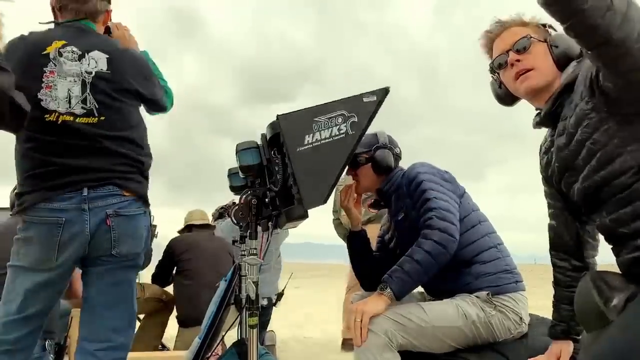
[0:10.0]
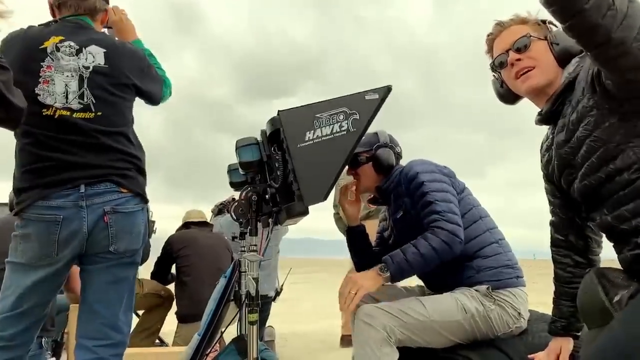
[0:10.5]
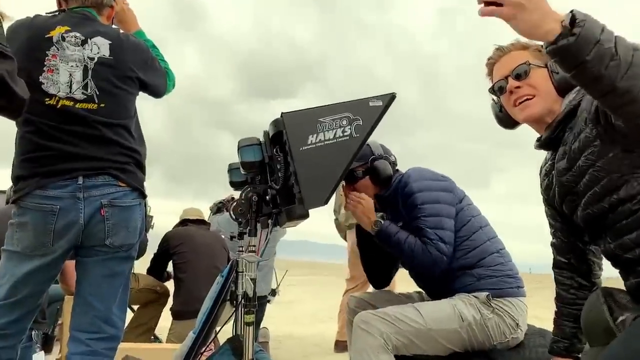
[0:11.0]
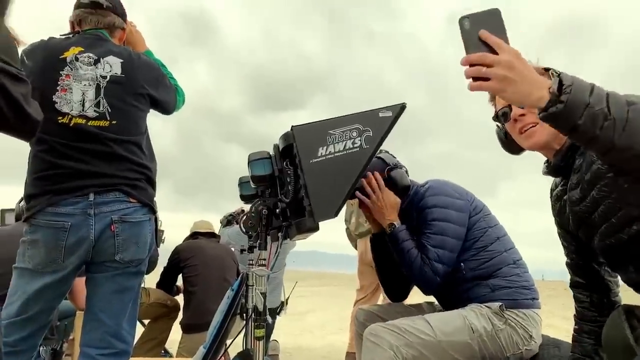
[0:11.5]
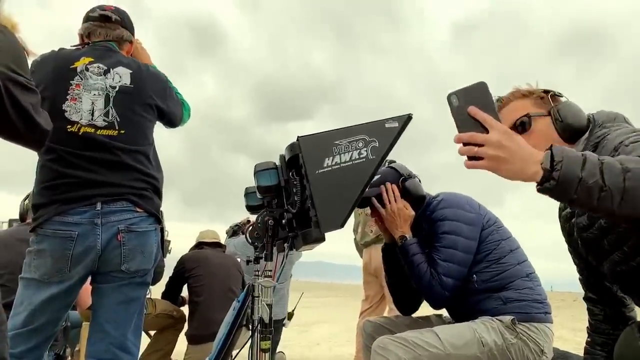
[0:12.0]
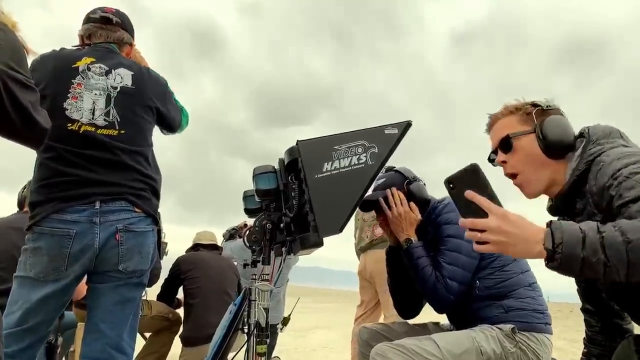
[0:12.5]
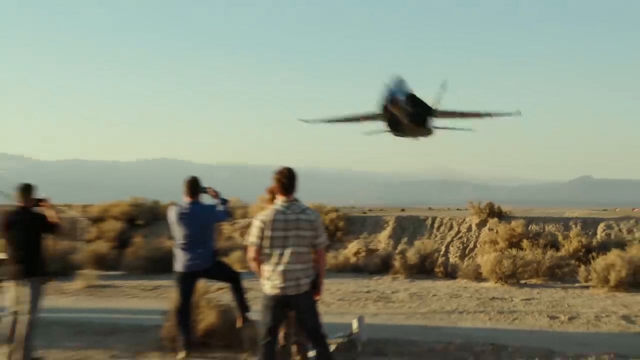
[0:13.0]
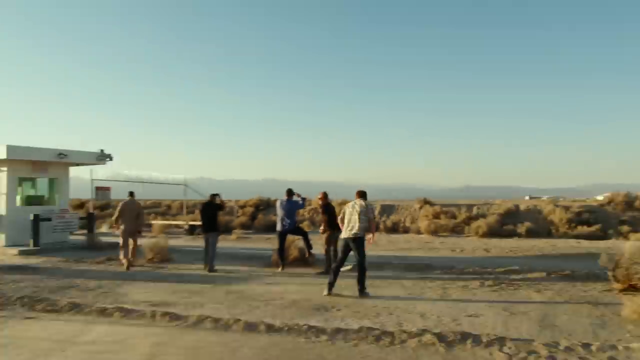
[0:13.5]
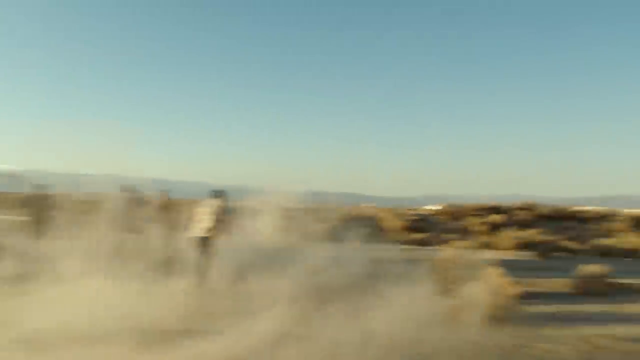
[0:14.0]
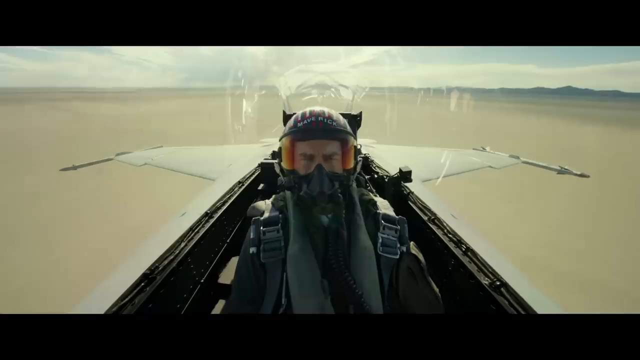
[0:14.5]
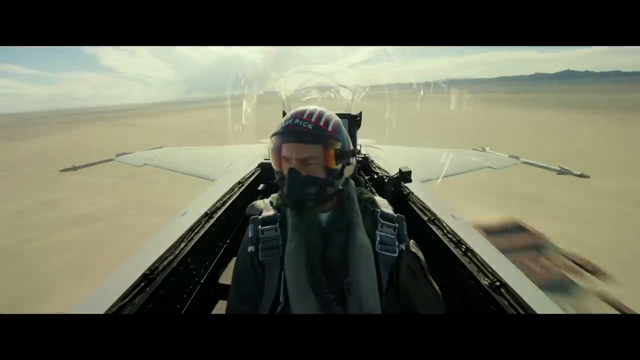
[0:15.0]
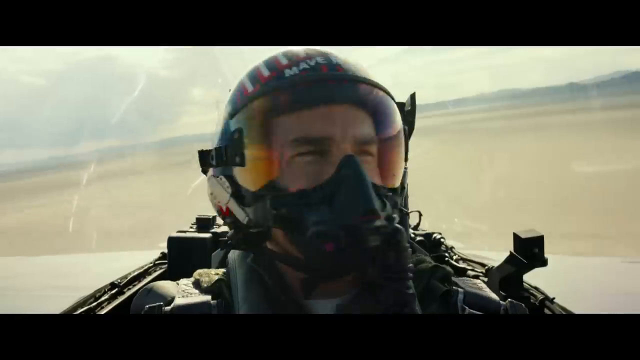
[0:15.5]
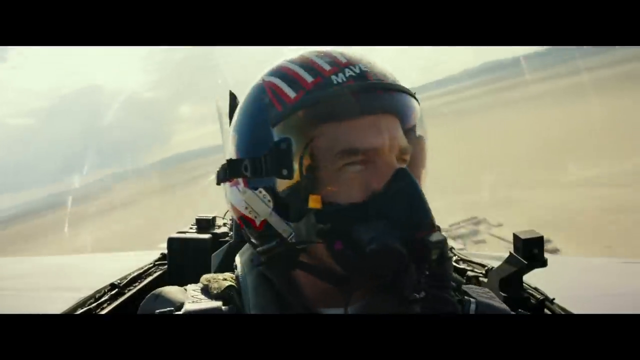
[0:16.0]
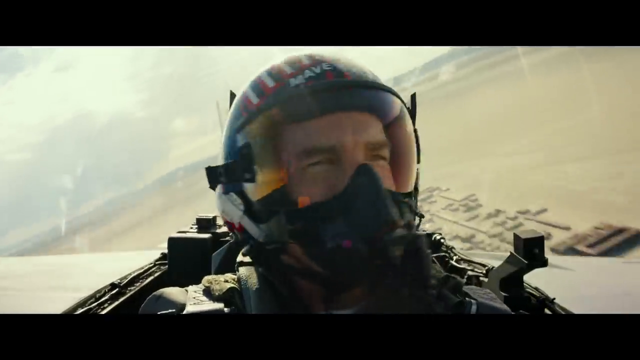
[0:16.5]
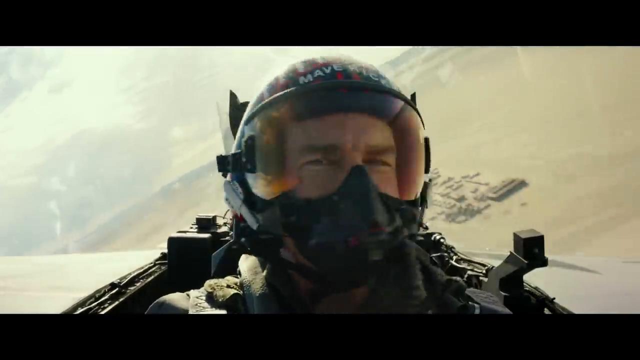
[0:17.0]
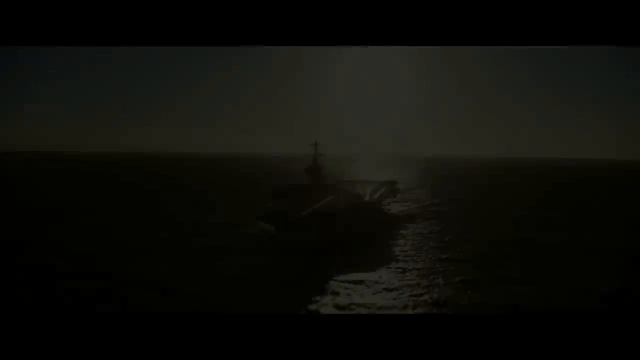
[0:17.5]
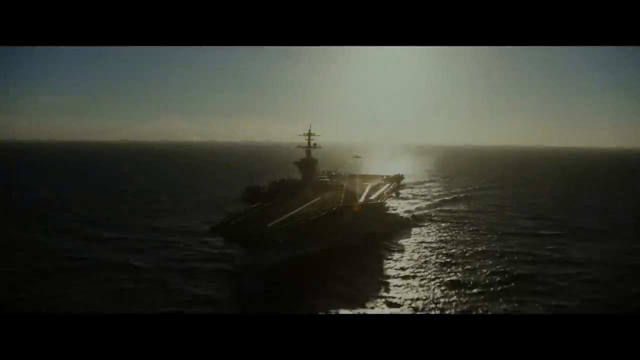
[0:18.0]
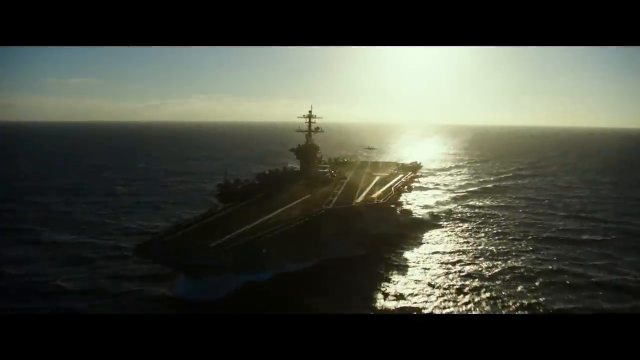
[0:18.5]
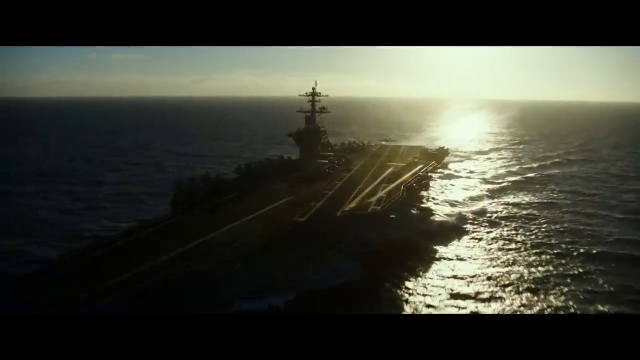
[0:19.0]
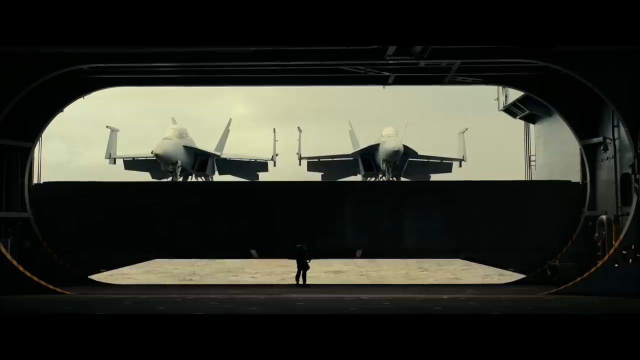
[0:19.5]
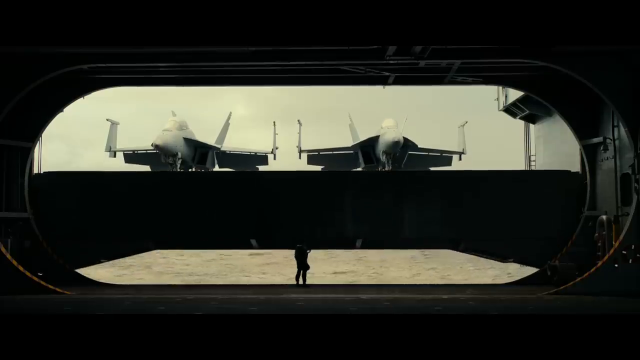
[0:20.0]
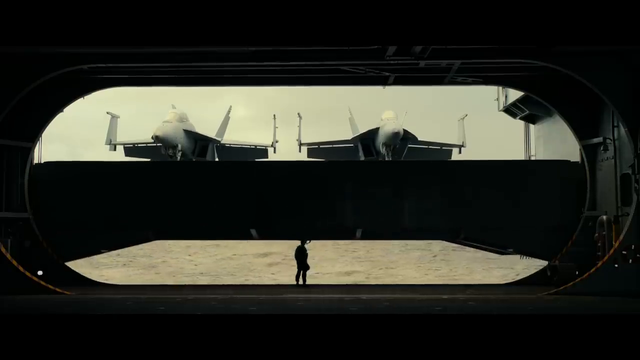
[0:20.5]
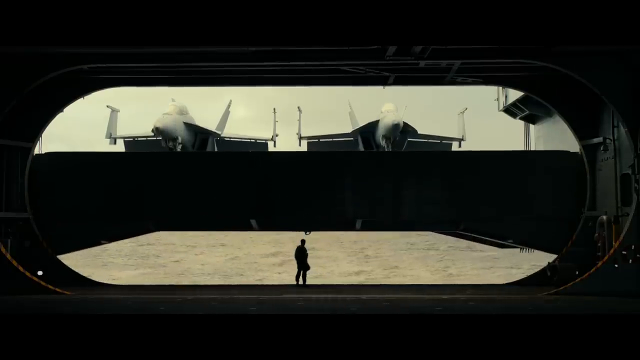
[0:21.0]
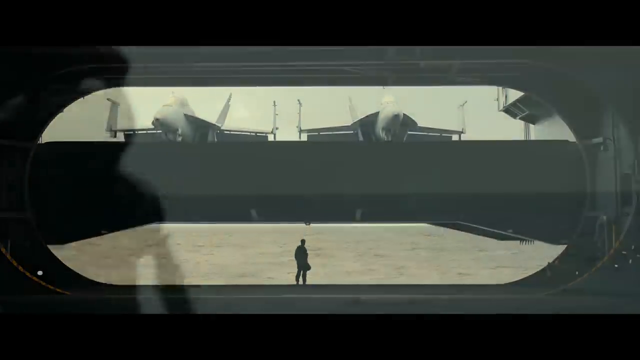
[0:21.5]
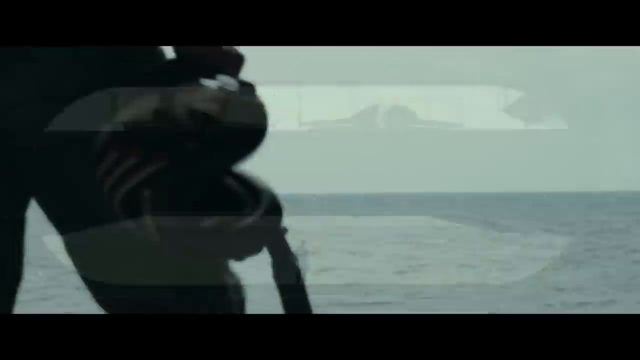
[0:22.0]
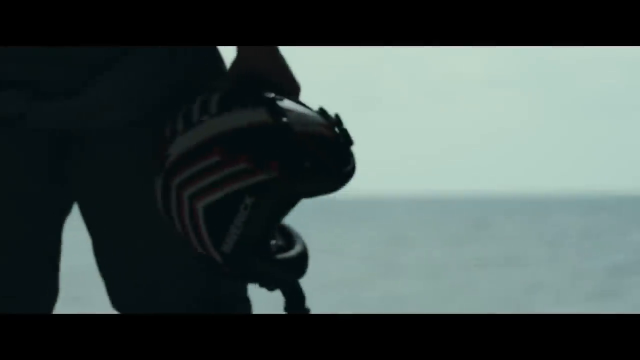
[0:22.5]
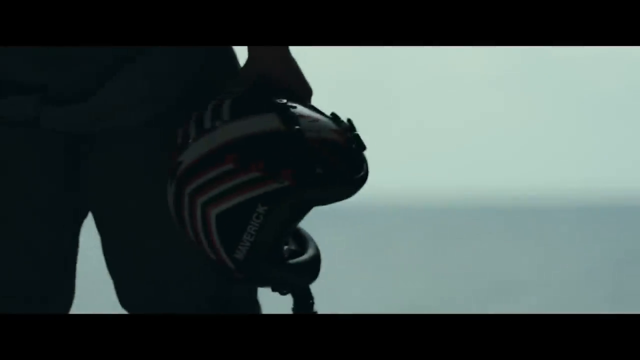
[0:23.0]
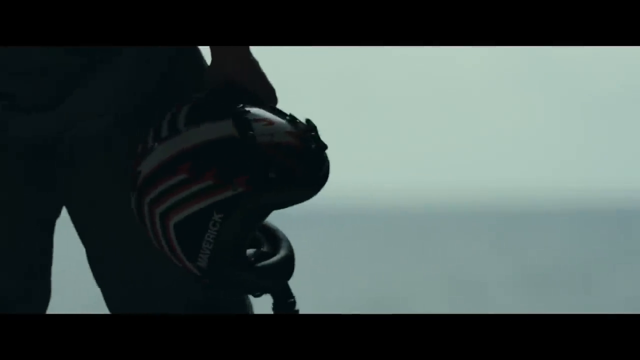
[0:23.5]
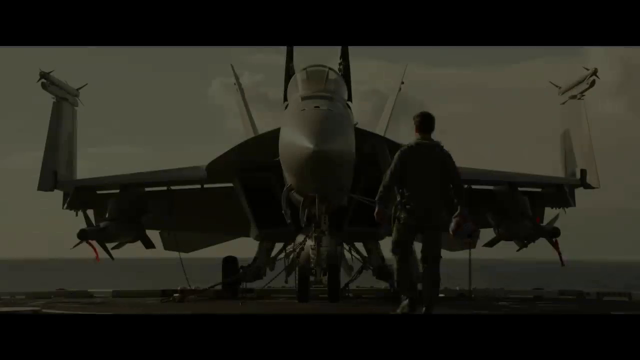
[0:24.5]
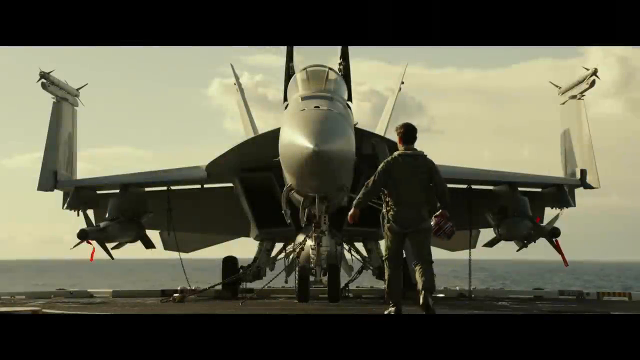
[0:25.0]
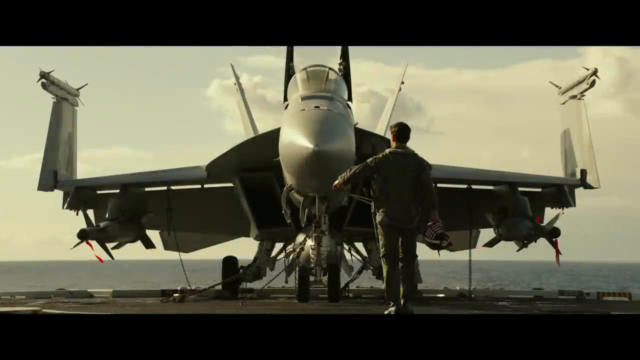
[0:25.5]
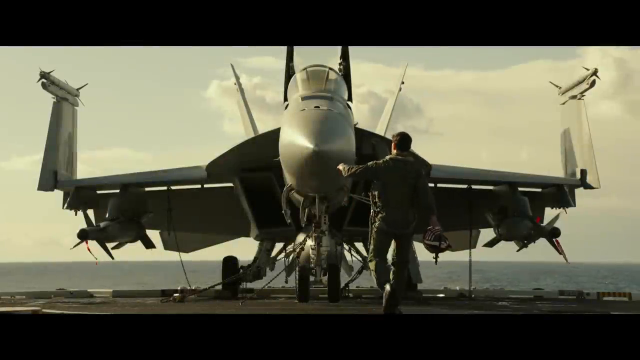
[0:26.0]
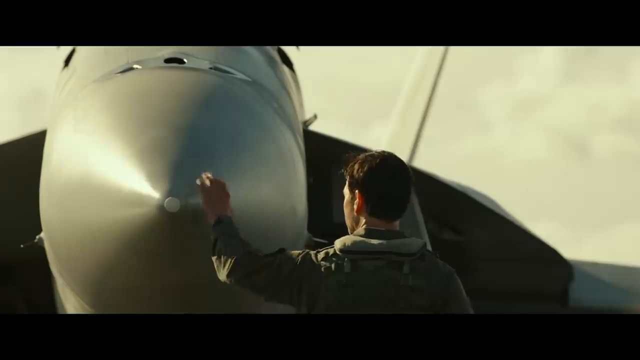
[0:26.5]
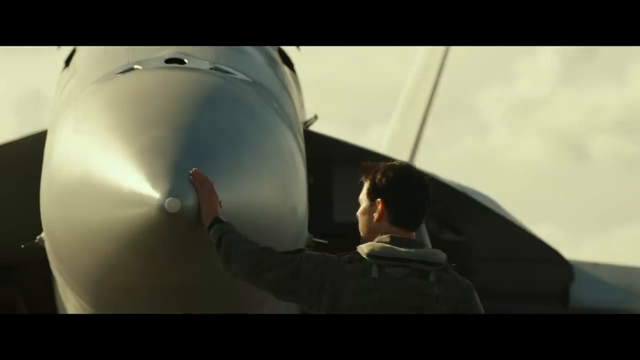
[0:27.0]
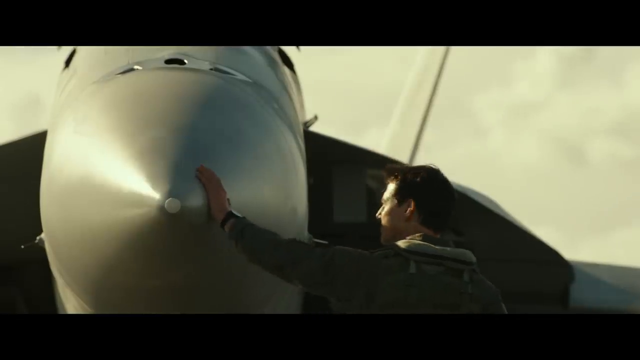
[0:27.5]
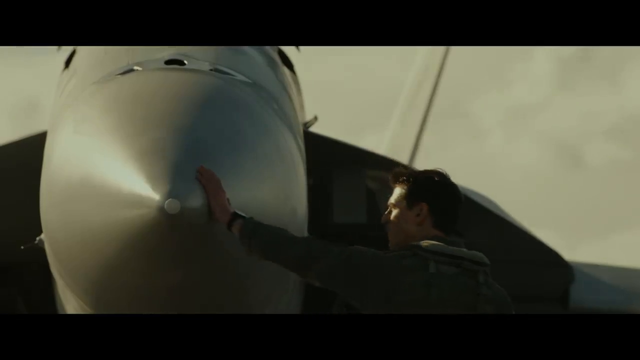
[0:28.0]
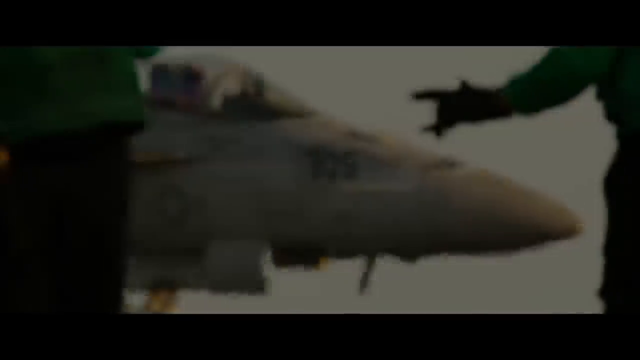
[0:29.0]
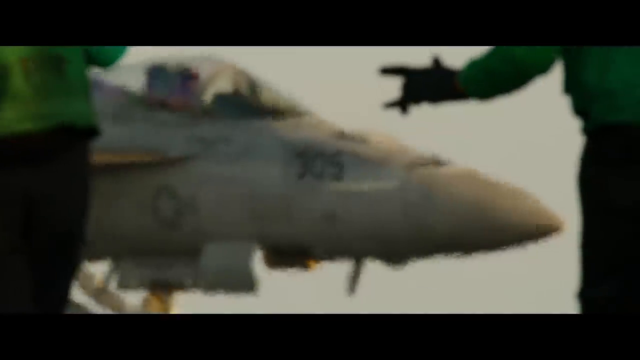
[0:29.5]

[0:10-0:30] People look up at the man flying over them in the airplane. They seem to be in their mid-thirties and are all wearing black. It seems to be a competition: two airplanes are up in the air, and the pilots look at each other. Jerry and Joseph appear, apparently explaining what is going on, and the names "Jerry" and "Joseph" are shown as text. An American flag is visible, suggesting the setting is in America. The scene changes as people go from the start to the end, where people with cameras wait to film what is happening. Someone is recording everything. Another man's hair blows as the airplane passes over their heads and stirs up the air. The people look happy and seem to be having fun.